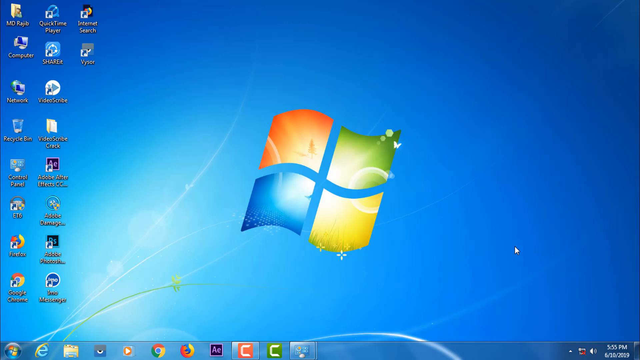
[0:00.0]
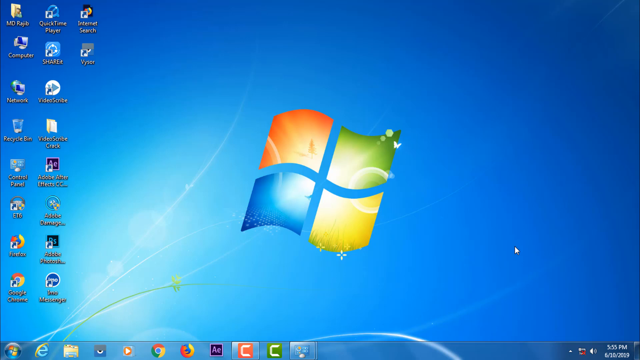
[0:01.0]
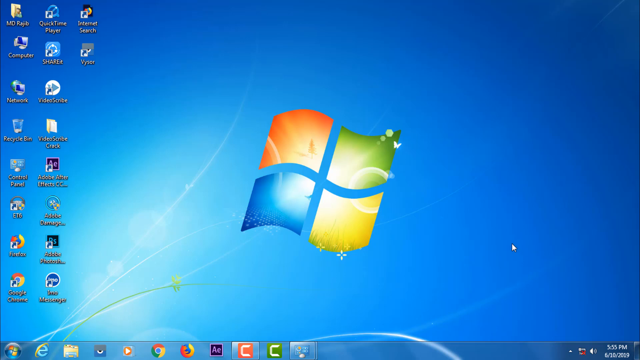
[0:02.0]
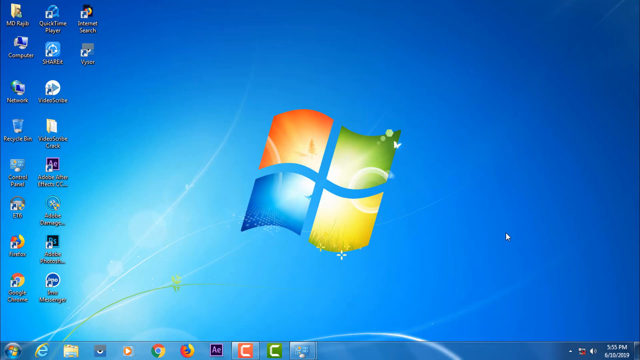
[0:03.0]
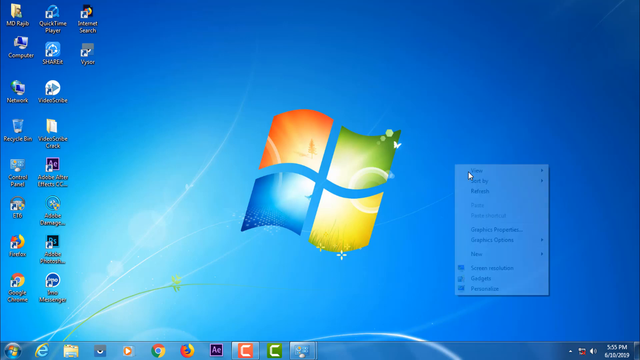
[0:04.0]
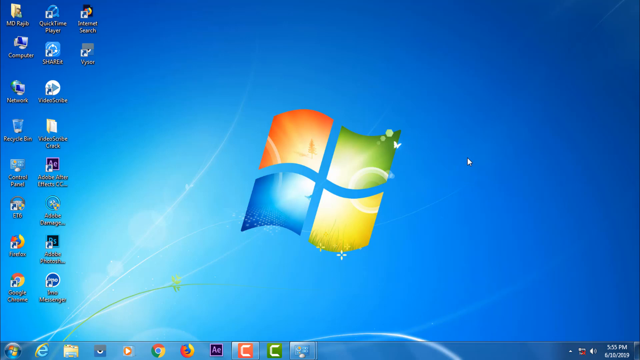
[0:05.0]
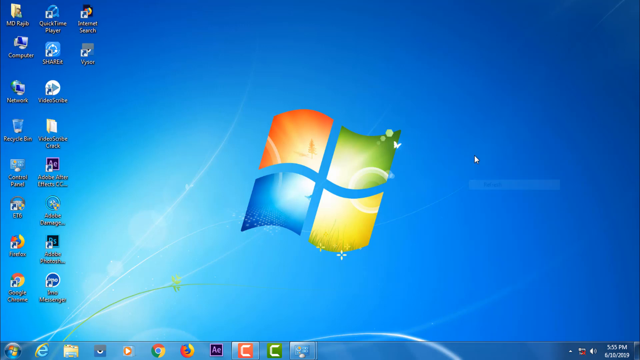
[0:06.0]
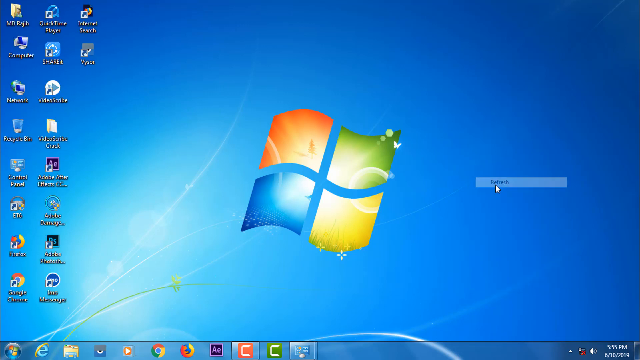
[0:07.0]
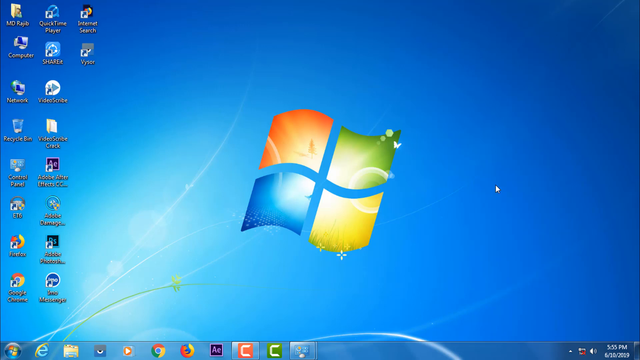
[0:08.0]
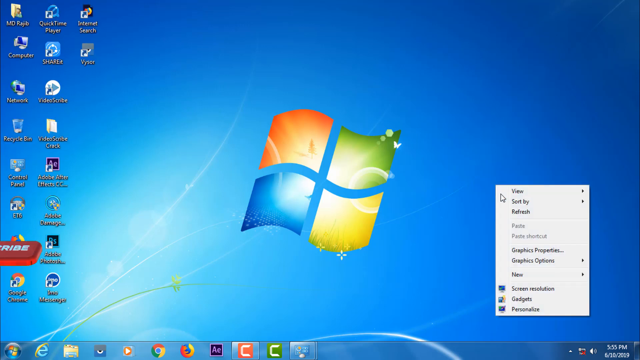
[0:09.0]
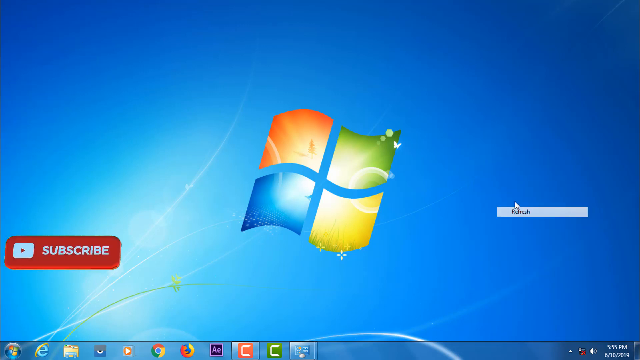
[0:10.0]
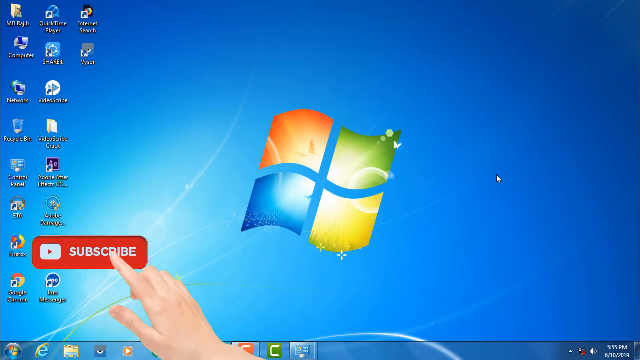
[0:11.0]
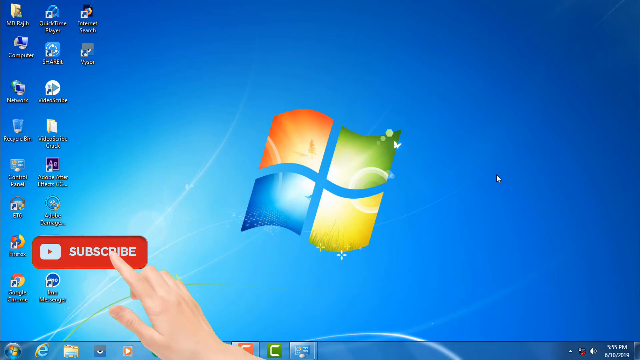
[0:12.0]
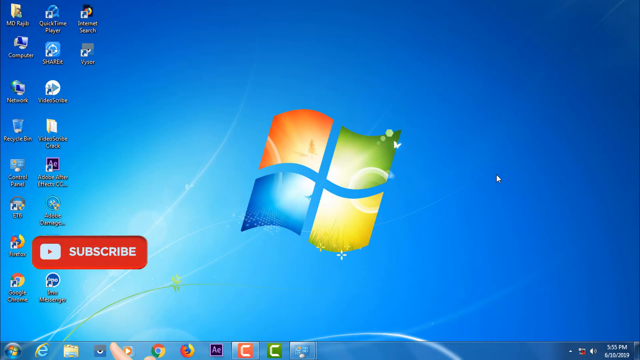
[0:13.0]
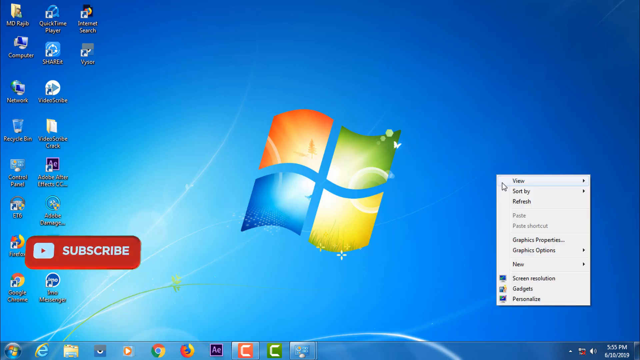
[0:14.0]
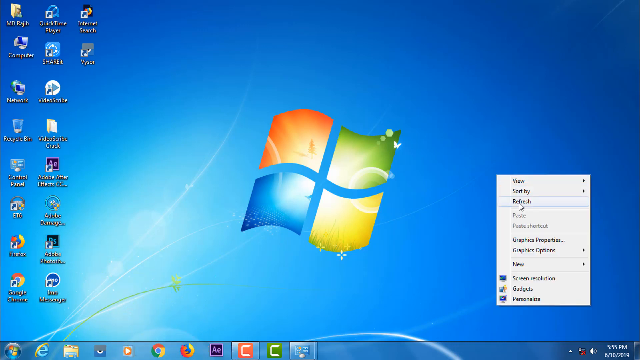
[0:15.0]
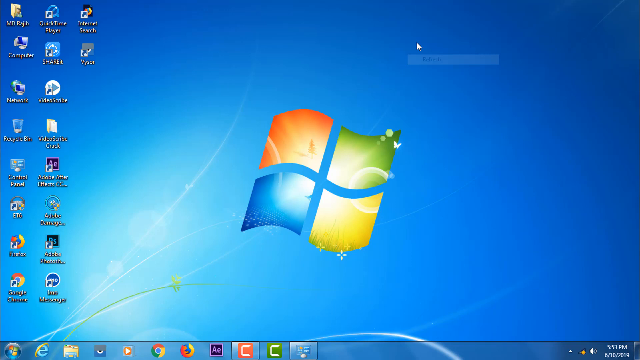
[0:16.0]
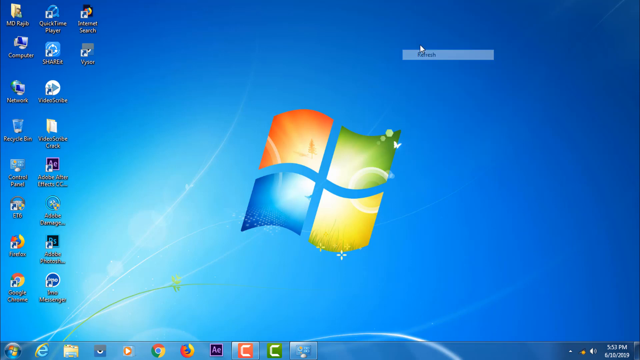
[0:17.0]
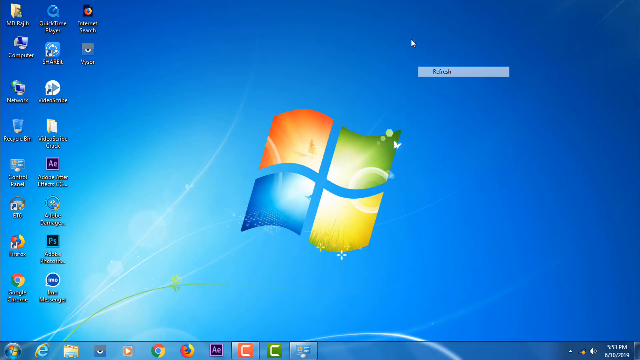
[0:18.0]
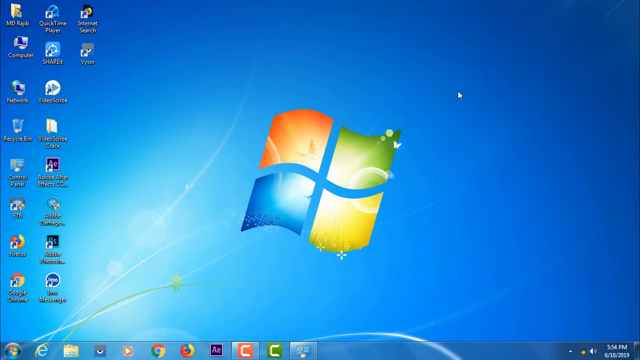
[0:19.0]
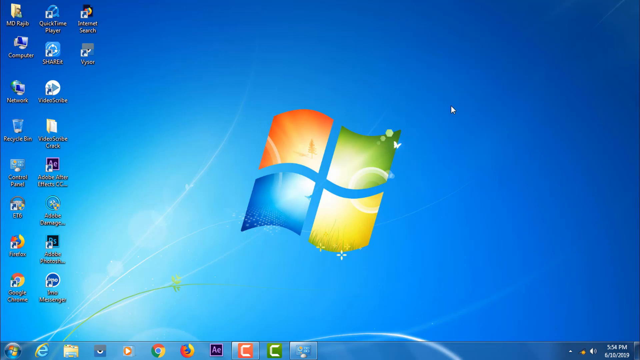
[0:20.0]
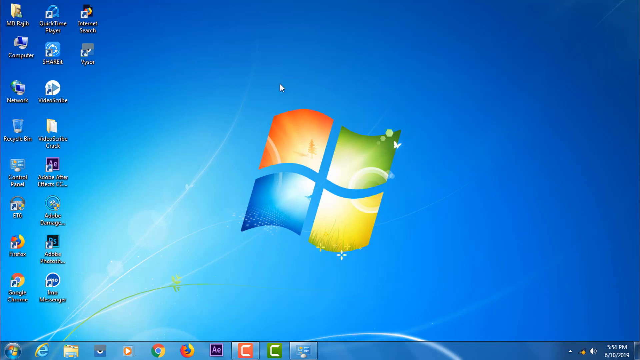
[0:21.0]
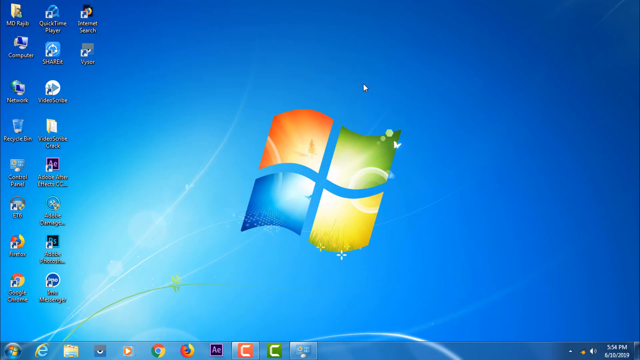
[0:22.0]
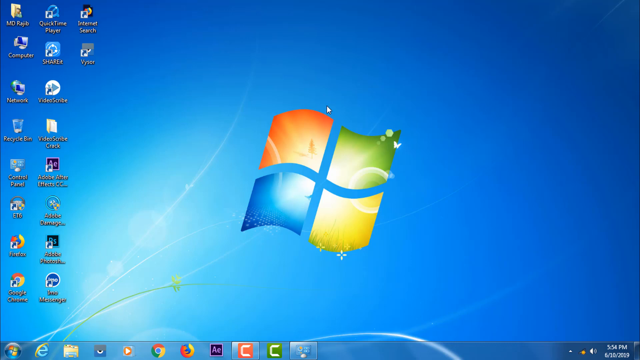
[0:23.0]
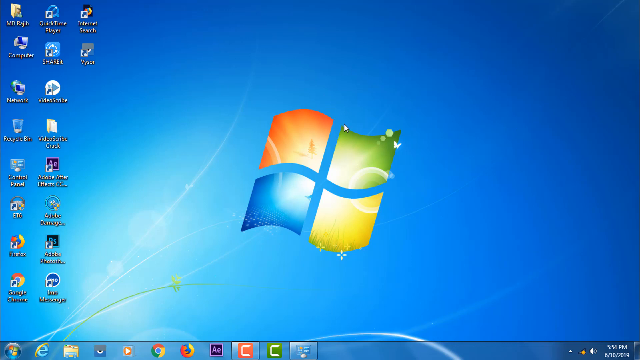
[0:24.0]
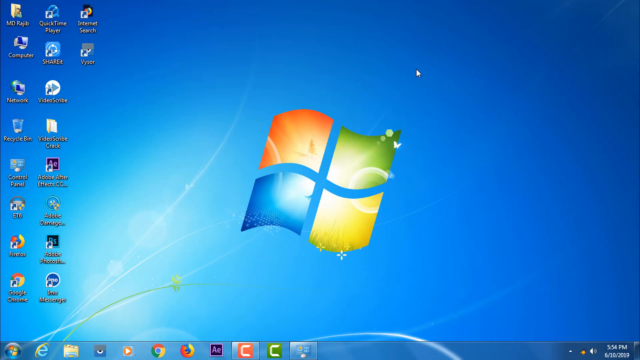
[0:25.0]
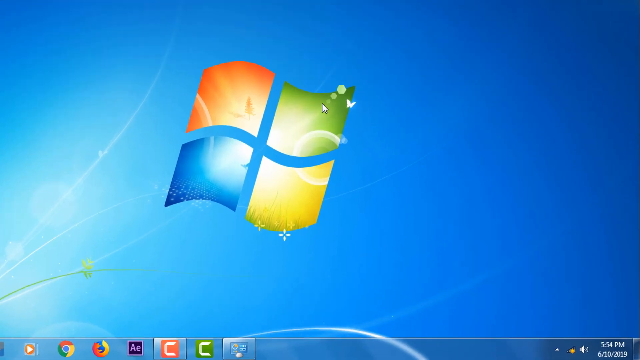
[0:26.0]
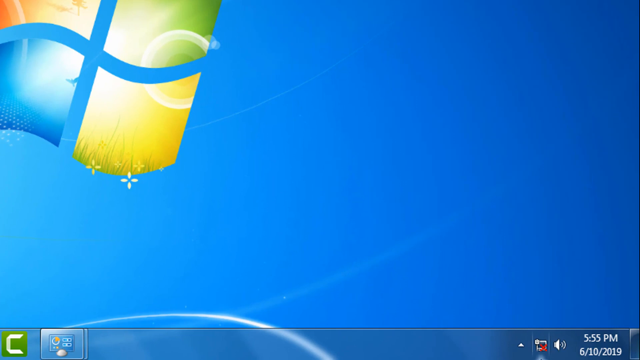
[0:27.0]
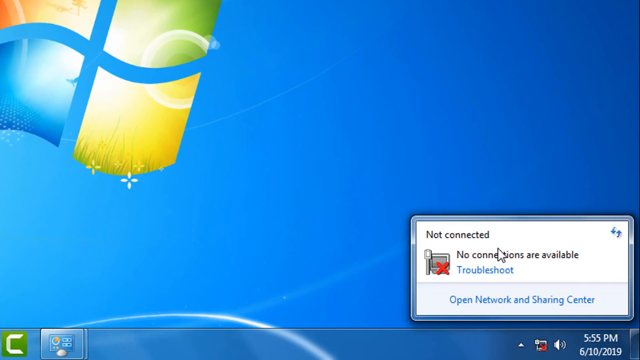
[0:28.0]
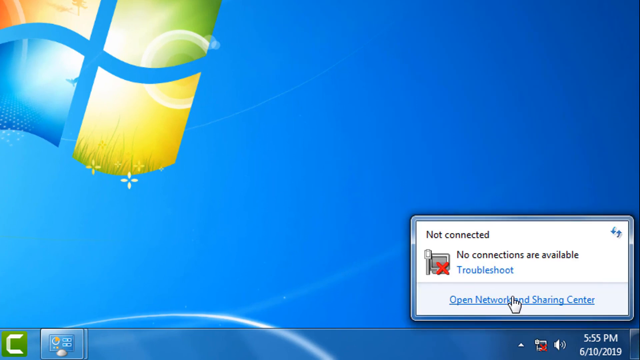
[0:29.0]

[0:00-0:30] A blue desktop screen appears with the Windows logo in the middle and some applications down the left-hand side. The mouse pointer is at the lower right; it moves up slightly, and the user right-clicks and clicks refresh, repeating the right-click and refresh four times in total. At the bottom of the left side of the screen, a red YouTube subscribe button with white text appears and moves to the right, and an animated hand reaches up and touches the button to click it. The hand dips down off the screen out of view, and the subscribe button spins from down to up and moves left off the screen. The user keeps right-clicking and clicking refresh over and over. They then wiggle the mouse back and forth above the Windows logo before the view zooms in and they click a pop-up on the taskbar in the bottom right corner that says "Not connected. No connections are available. Troubleshoot Open Network and Sharing Center."